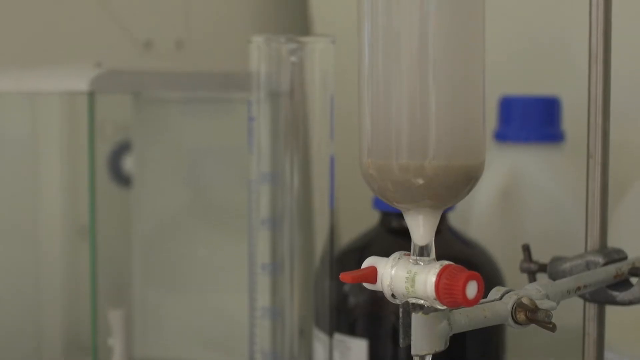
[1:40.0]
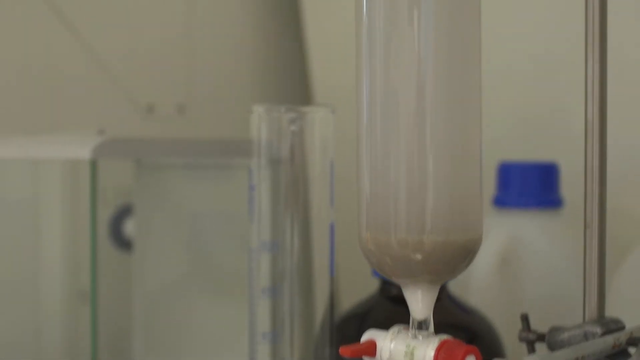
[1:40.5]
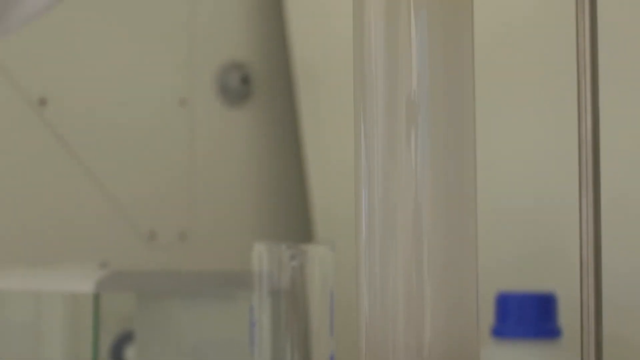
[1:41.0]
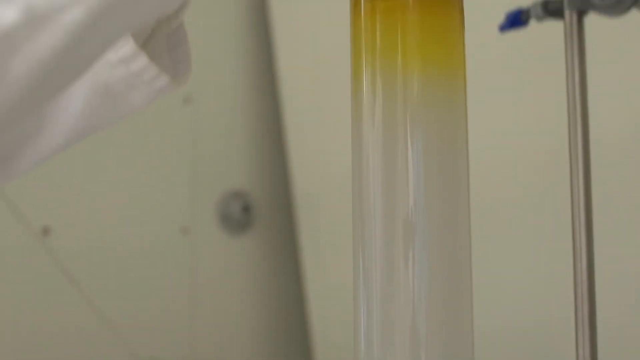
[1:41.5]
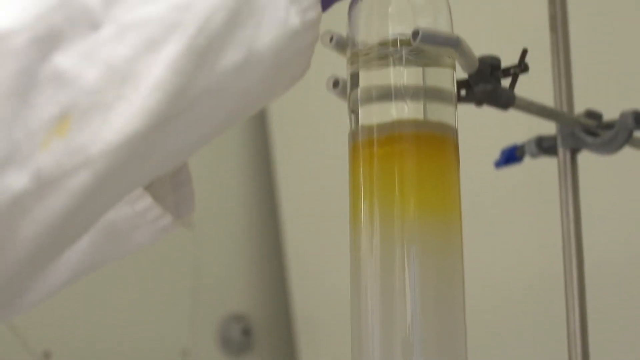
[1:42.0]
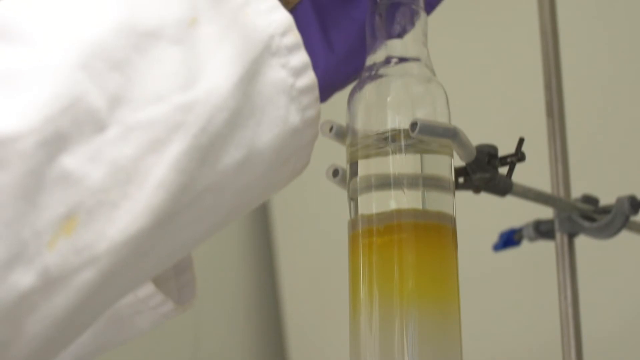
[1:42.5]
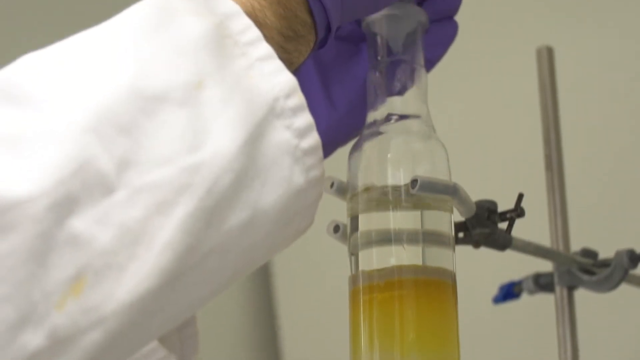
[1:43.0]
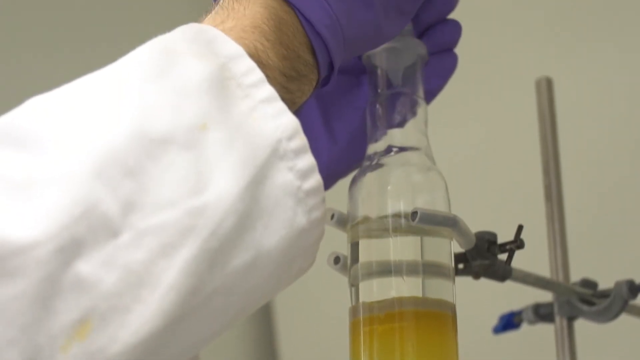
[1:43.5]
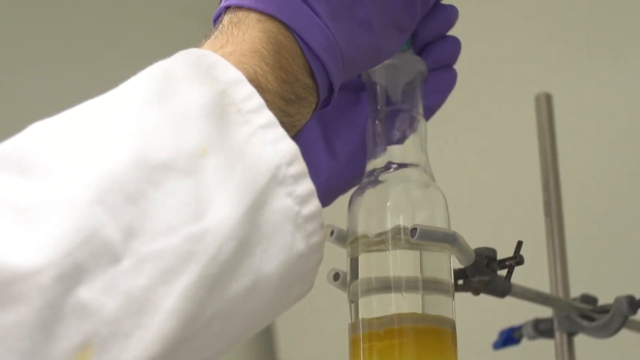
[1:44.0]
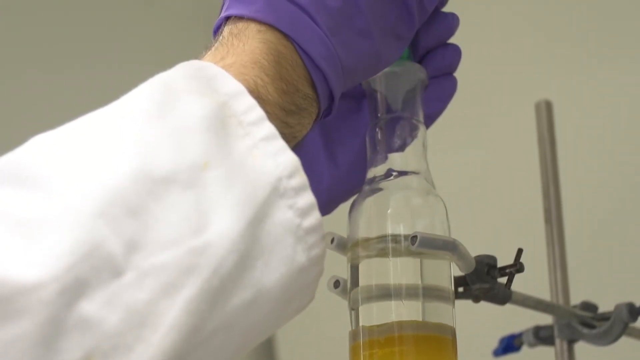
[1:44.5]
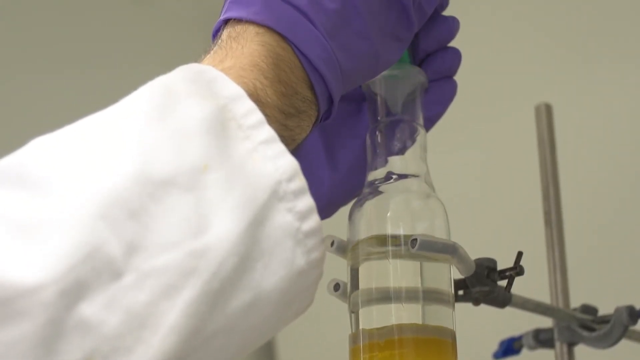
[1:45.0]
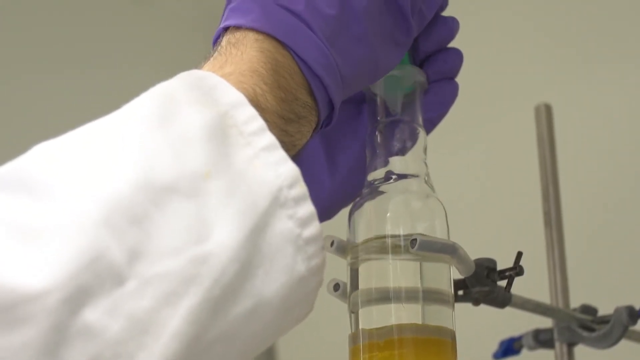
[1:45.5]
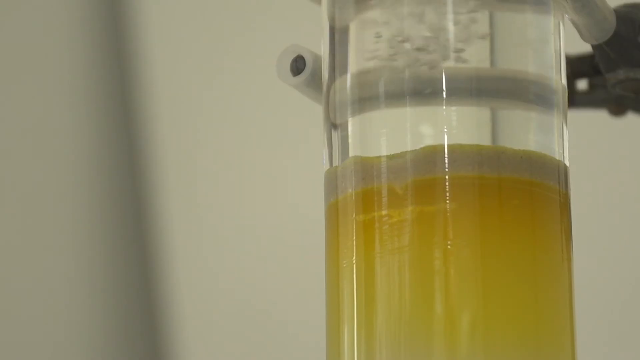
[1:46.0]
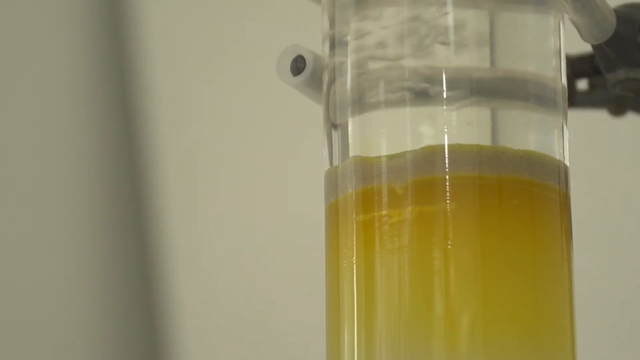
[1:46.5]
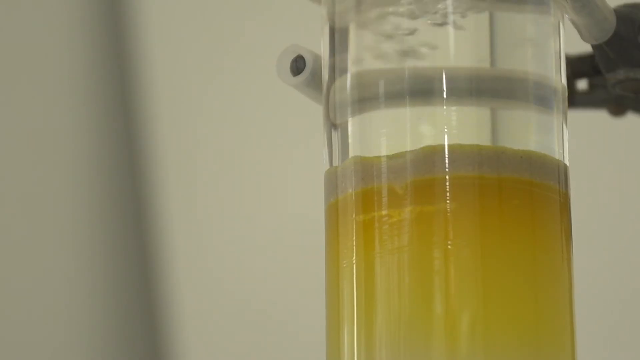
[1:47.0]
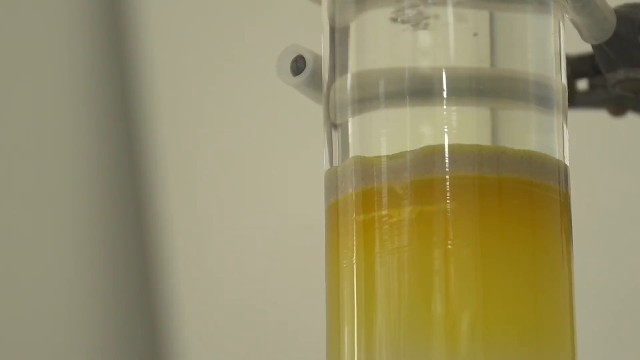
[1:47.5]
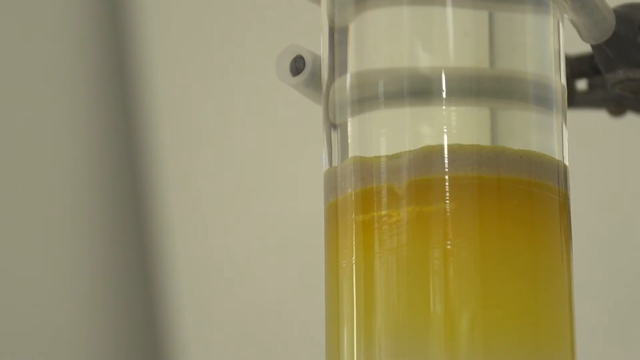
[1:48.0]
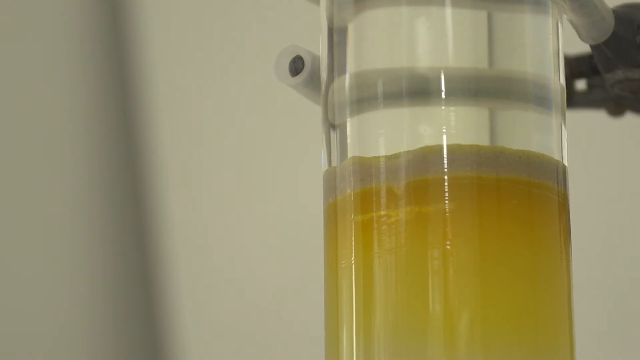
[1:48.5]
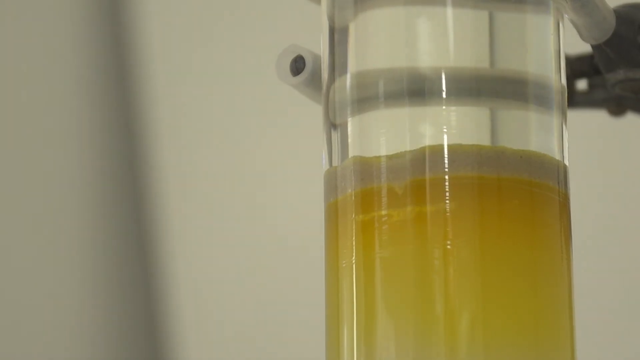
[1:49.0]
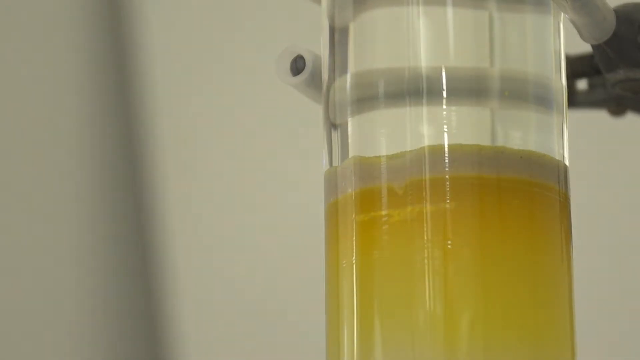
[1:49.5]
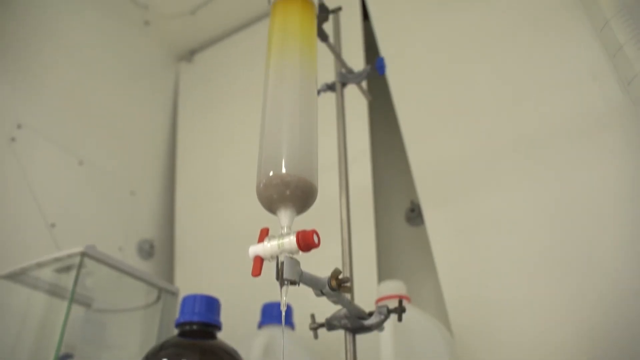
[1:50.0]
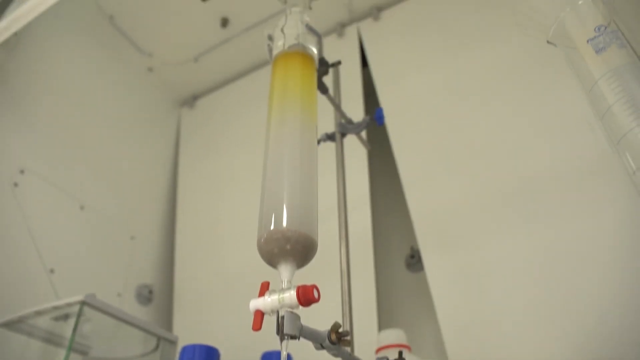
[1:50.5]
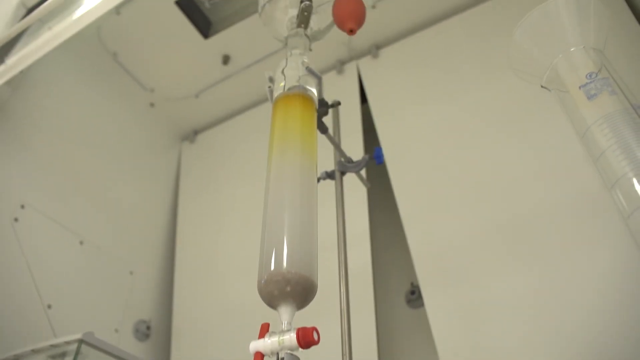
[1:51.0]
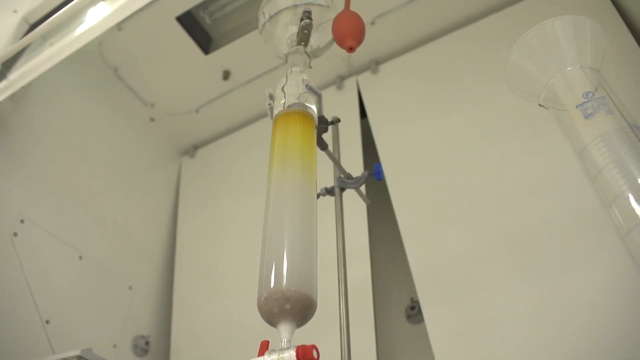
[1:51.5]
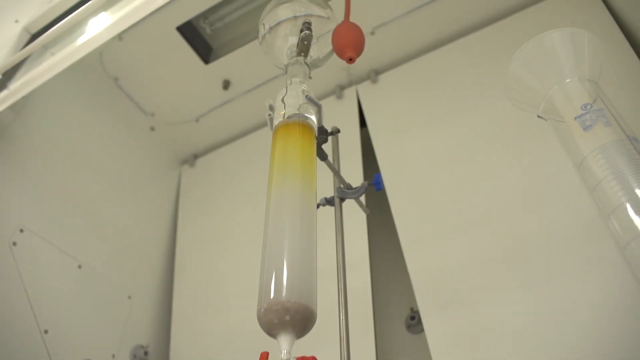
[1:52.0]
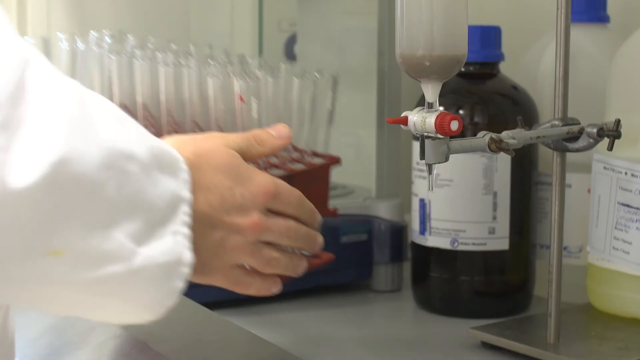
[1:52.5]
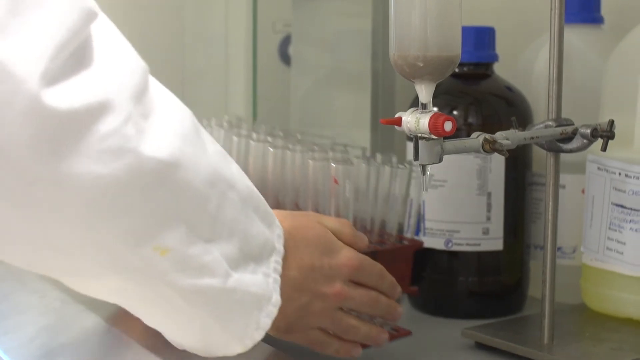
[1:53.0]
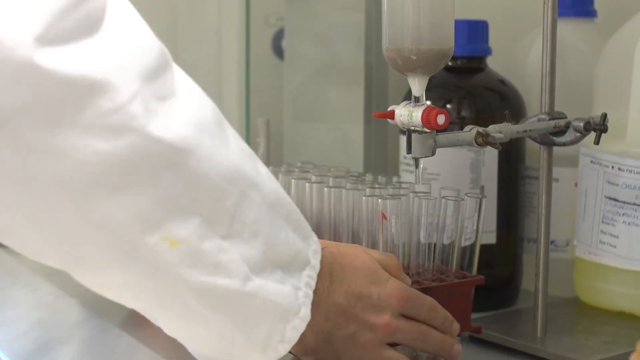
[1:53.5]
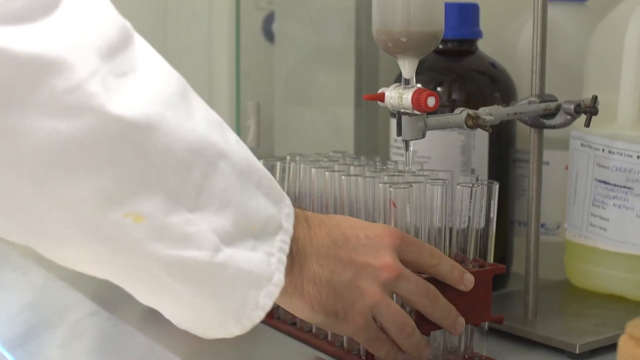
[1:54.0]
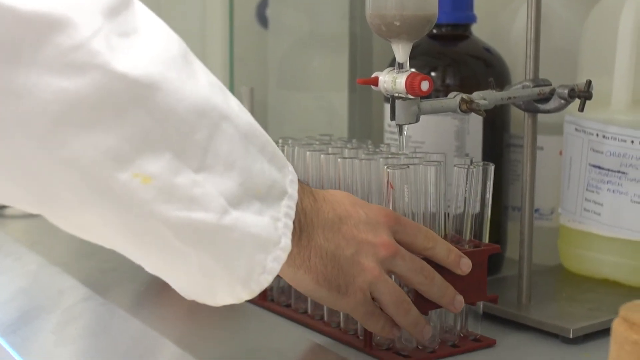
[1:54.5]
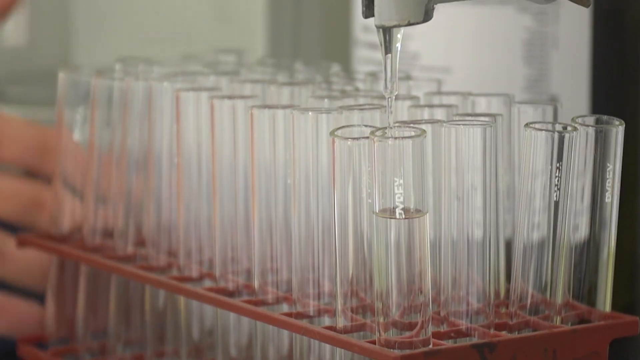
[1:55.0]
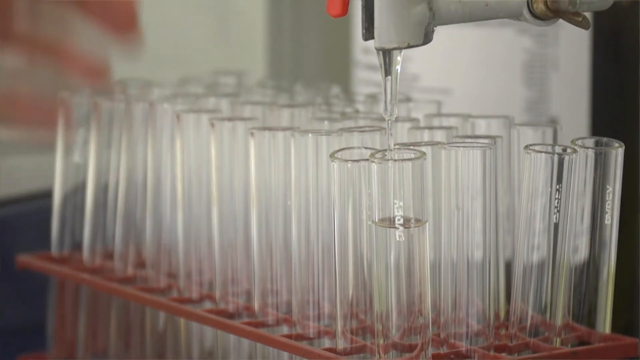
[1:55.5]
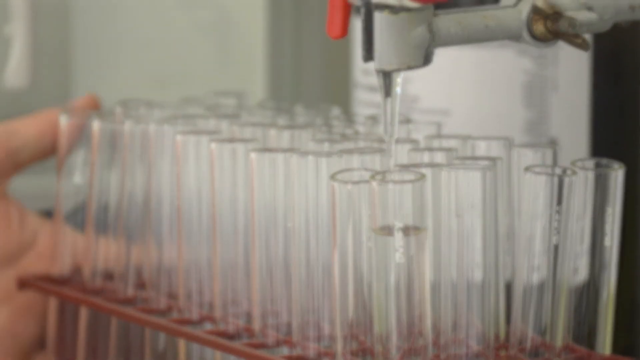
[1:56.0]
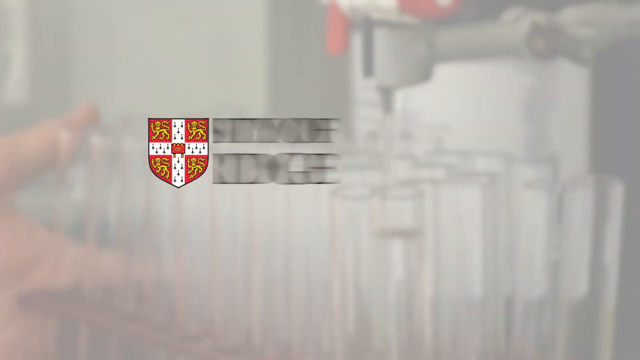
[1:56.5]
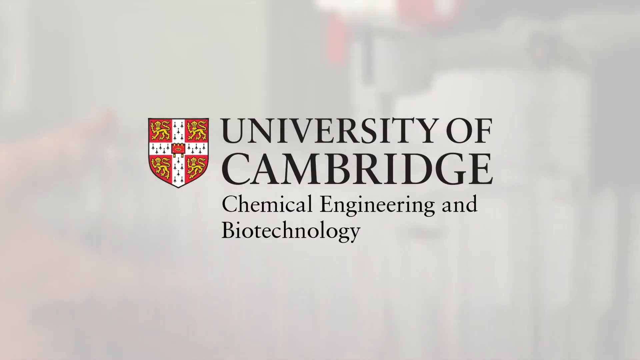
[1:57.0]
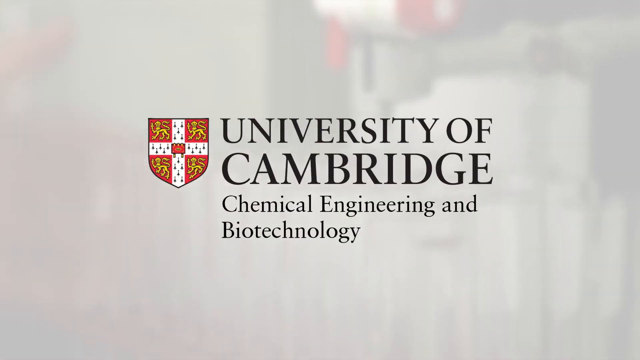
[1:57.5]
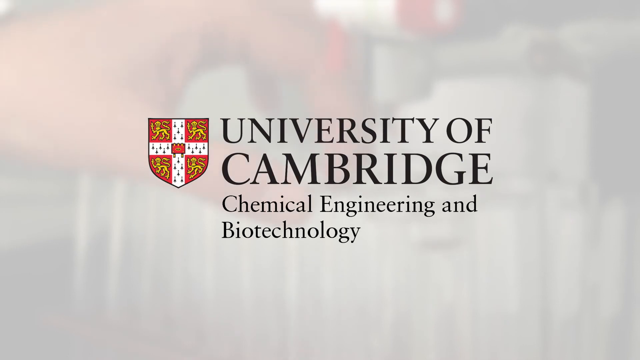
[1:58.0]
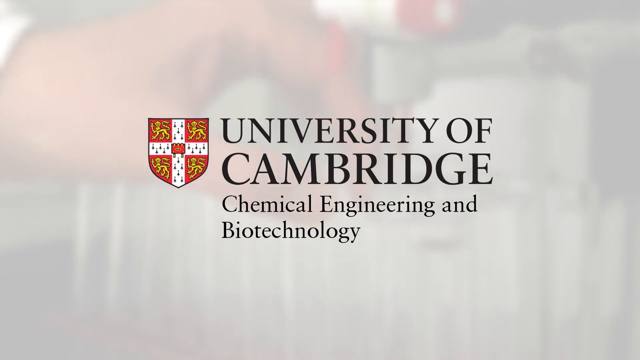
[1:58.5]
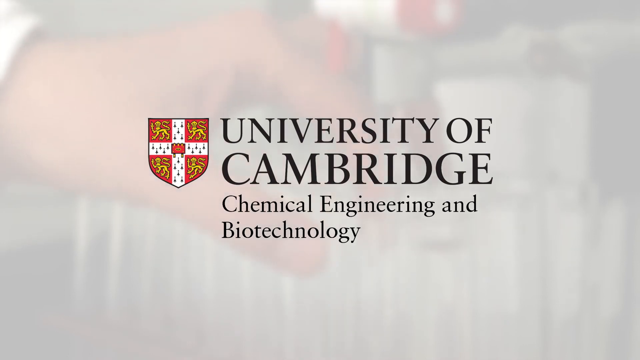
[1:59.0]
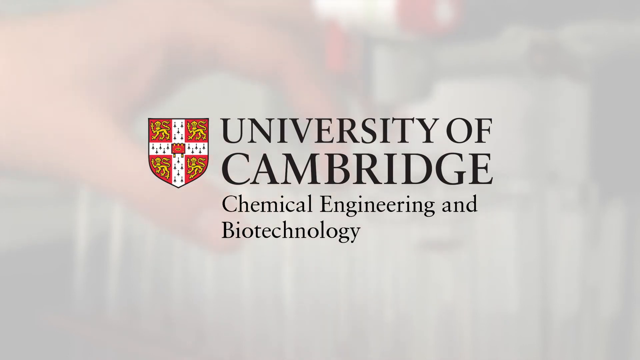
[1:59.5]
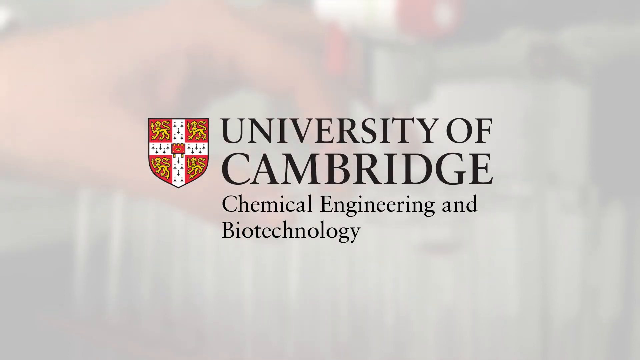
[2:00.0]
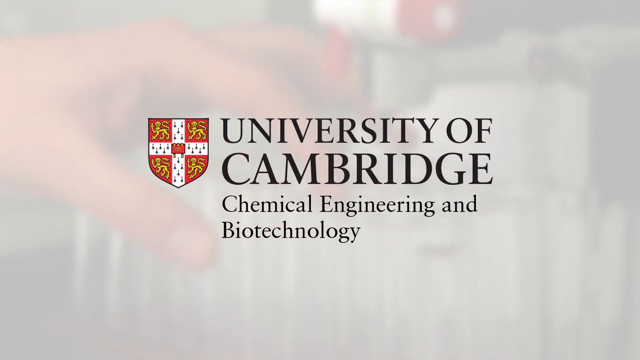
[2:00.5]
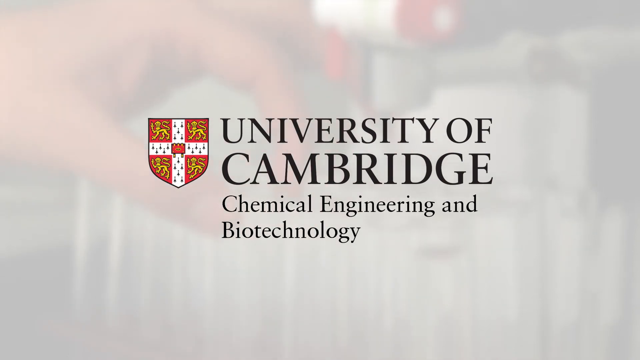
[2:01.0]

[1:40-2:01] A very long, tall glass object is shown as PhD student Christophe Frank pours in a liquid. He wears purple latex gloves and a white lab coat. The very tall experiment has a hose attached to it with a bulb. He brings over a tray of long vials pointed at the end and fills each one with the liquid coming out after it has been processed. A Cambridge University logo is on the right-hand side. He continues to pour liquid into the top; it passes through the long glass tube and comes out. At the end, the screen reads "University of Cambridge chemical engineering and biotechnology" along with the Cambridge University logo.